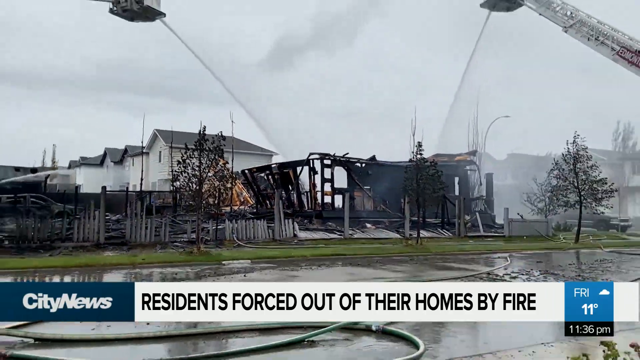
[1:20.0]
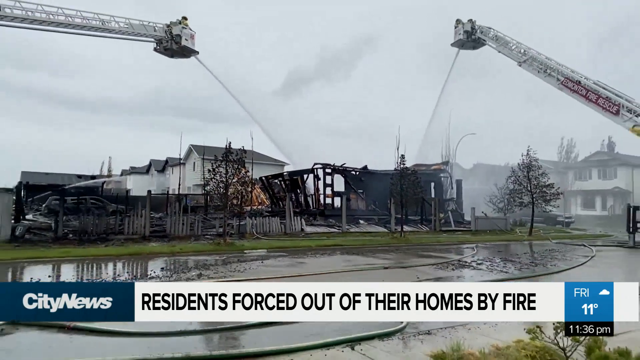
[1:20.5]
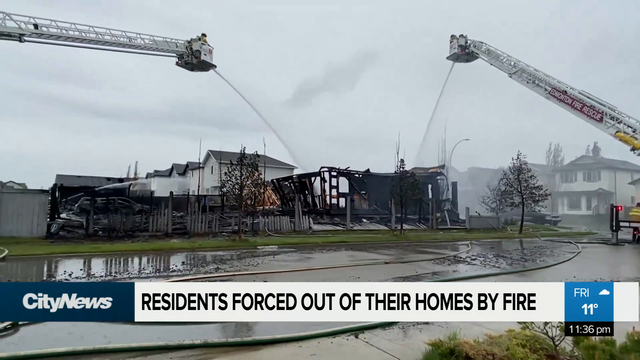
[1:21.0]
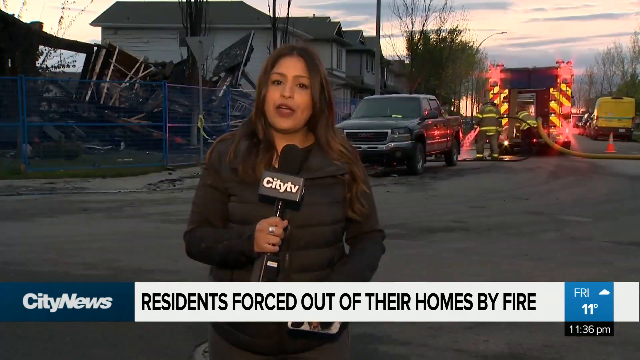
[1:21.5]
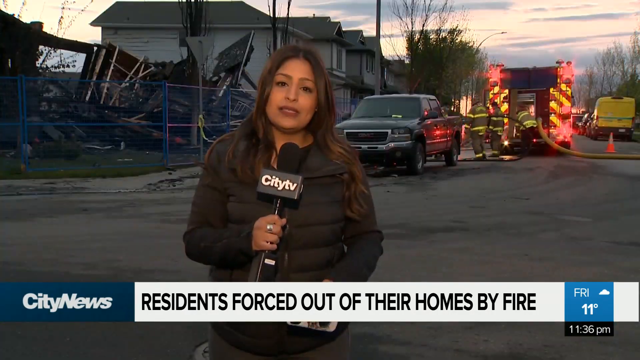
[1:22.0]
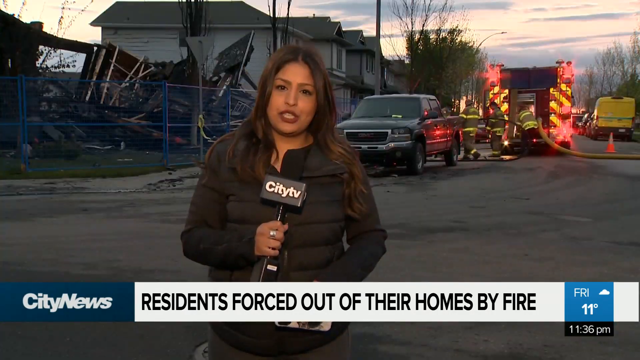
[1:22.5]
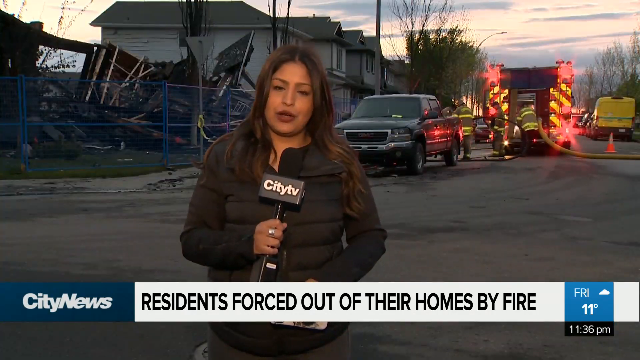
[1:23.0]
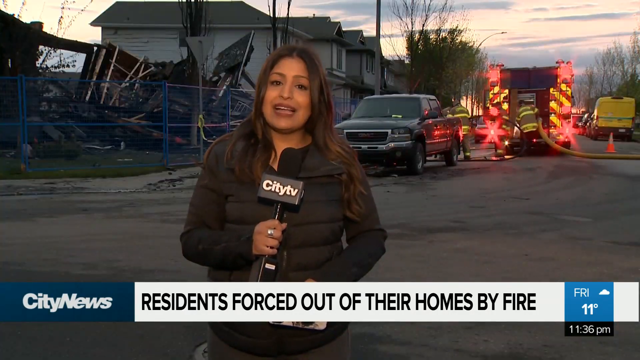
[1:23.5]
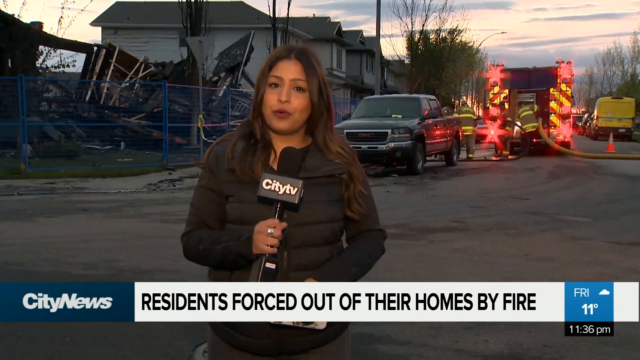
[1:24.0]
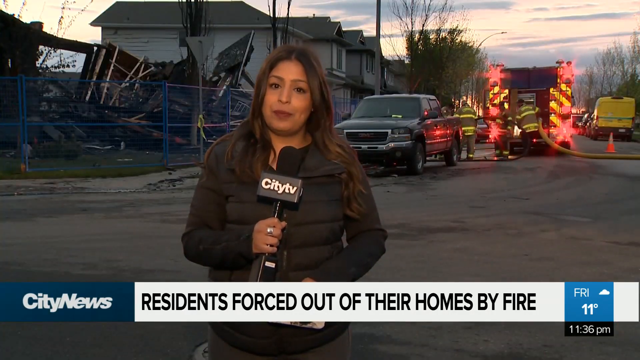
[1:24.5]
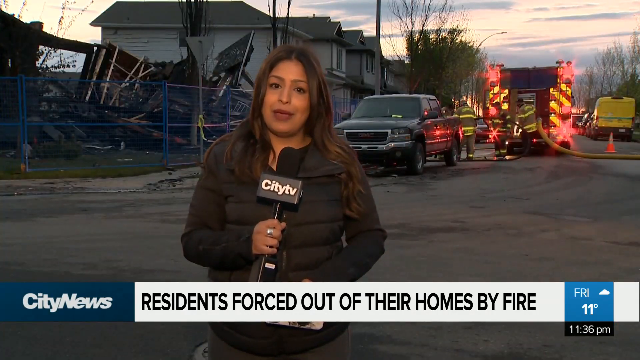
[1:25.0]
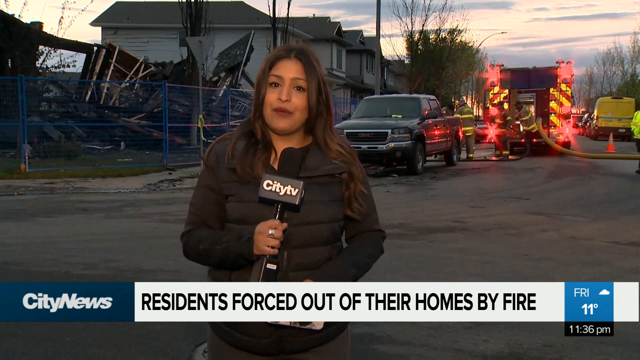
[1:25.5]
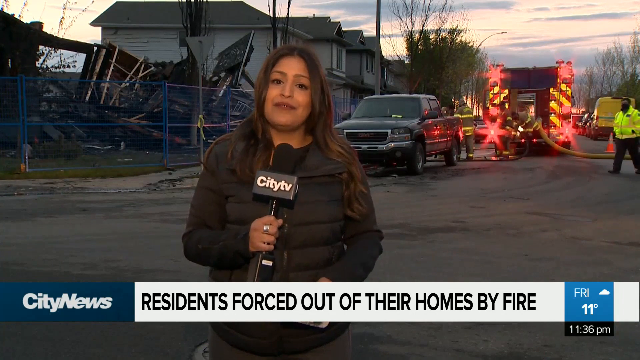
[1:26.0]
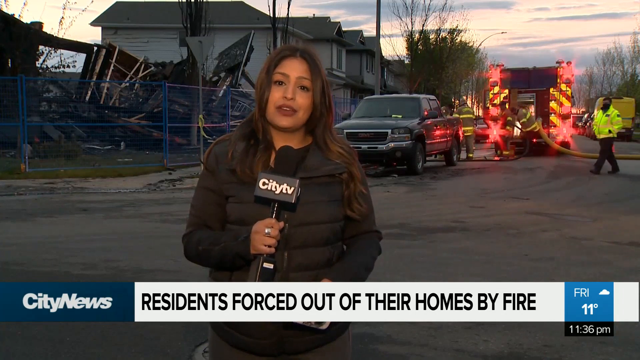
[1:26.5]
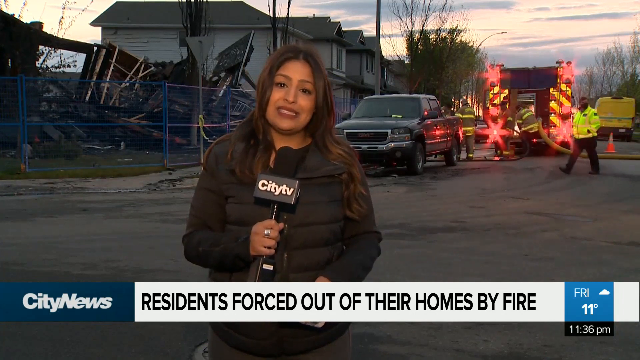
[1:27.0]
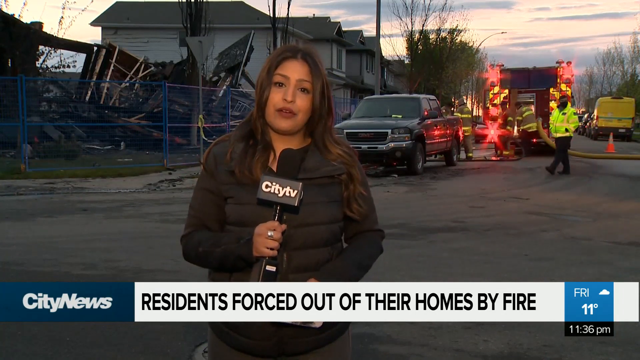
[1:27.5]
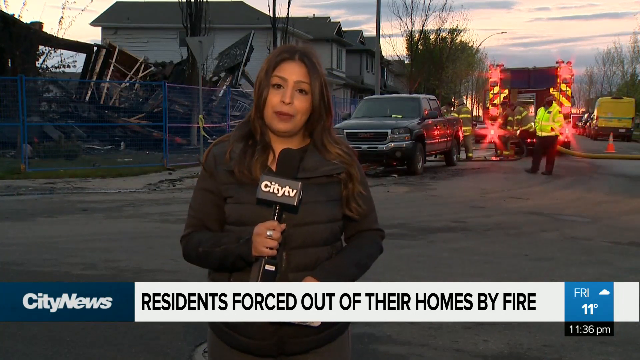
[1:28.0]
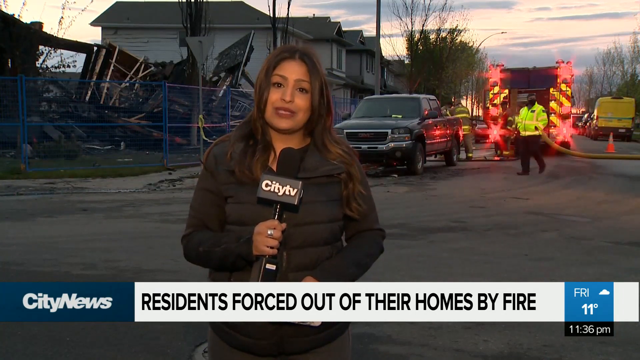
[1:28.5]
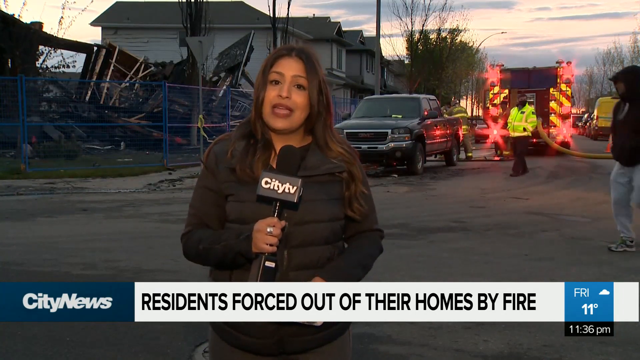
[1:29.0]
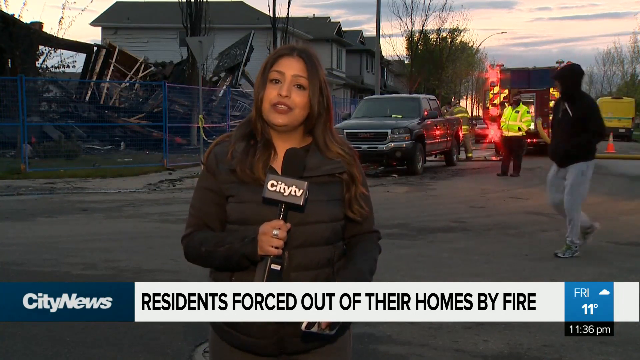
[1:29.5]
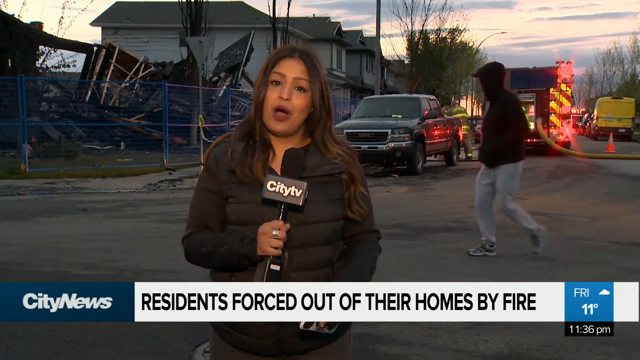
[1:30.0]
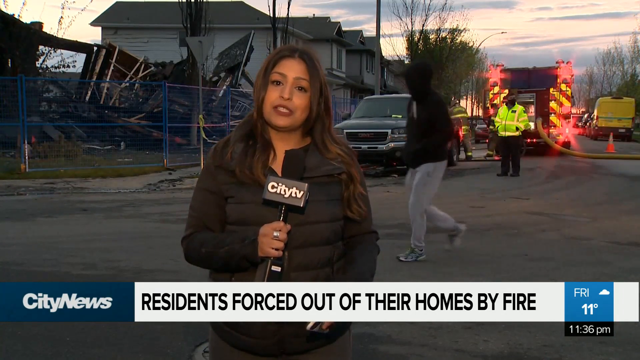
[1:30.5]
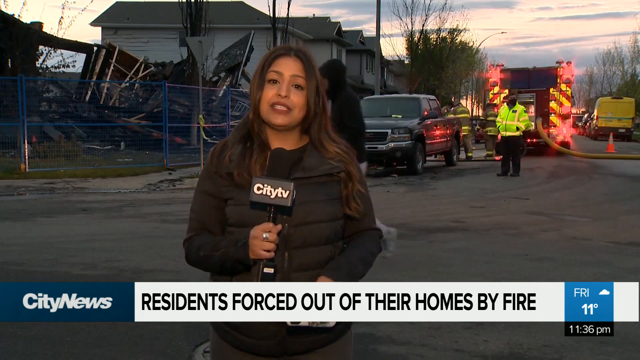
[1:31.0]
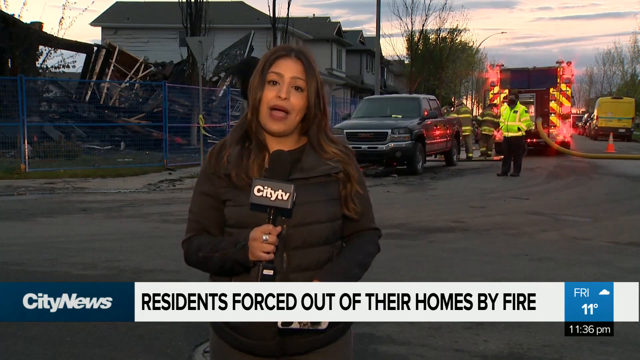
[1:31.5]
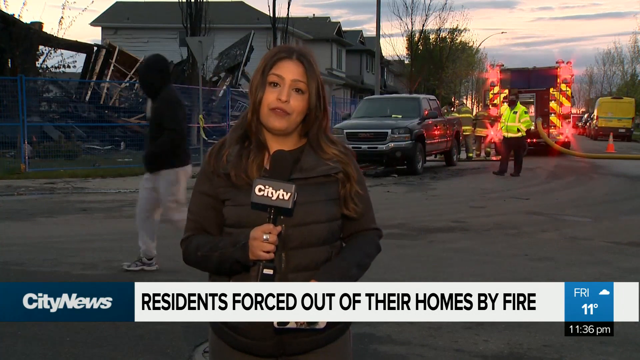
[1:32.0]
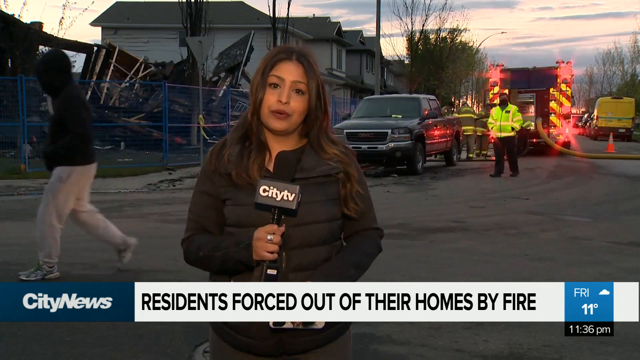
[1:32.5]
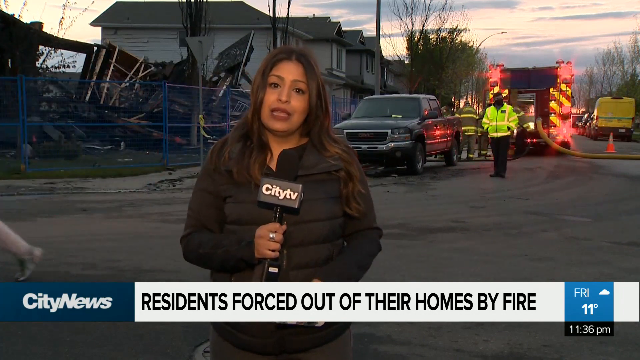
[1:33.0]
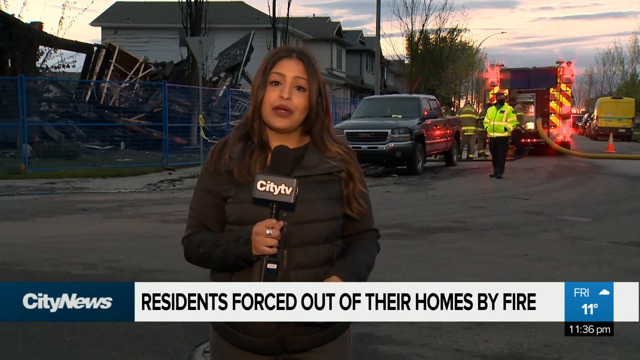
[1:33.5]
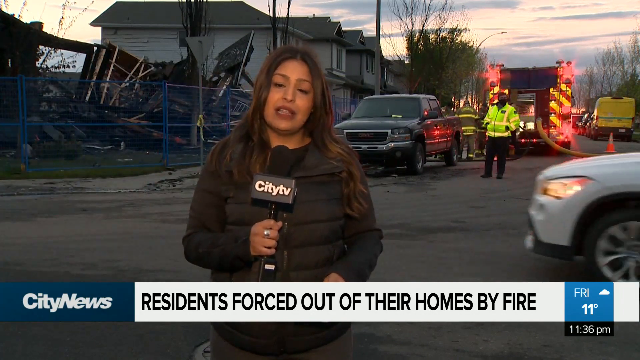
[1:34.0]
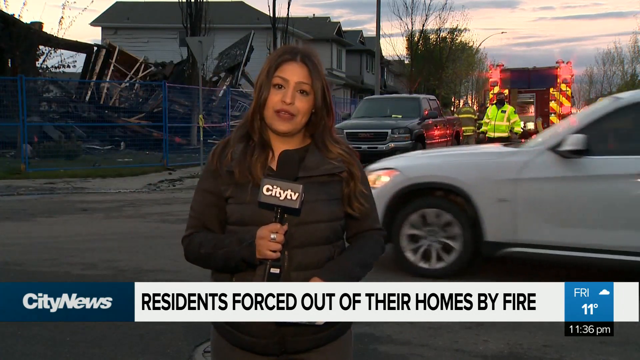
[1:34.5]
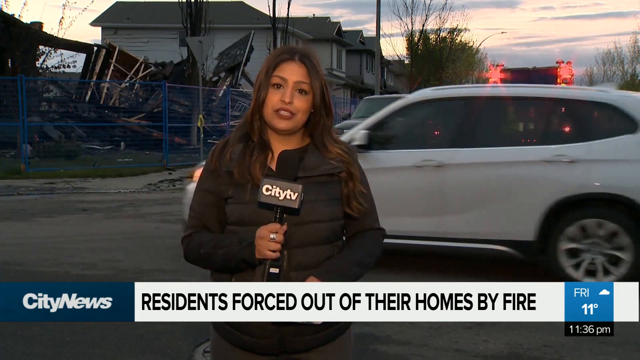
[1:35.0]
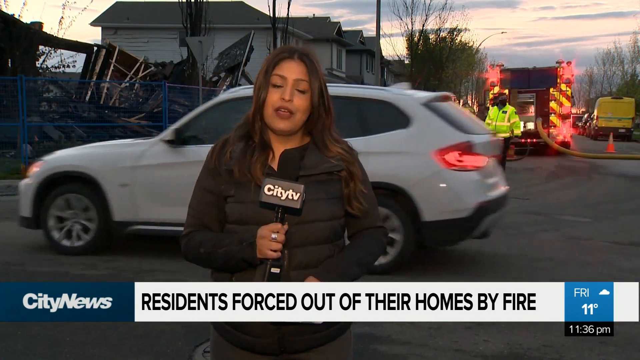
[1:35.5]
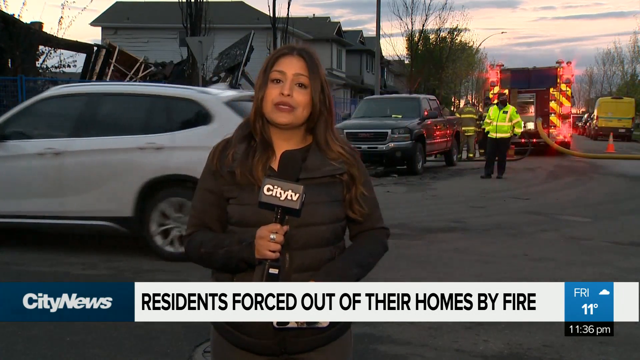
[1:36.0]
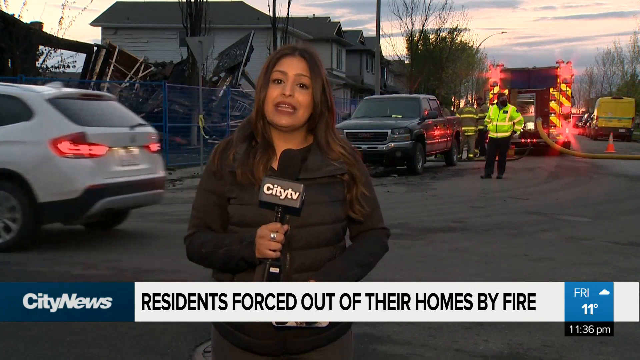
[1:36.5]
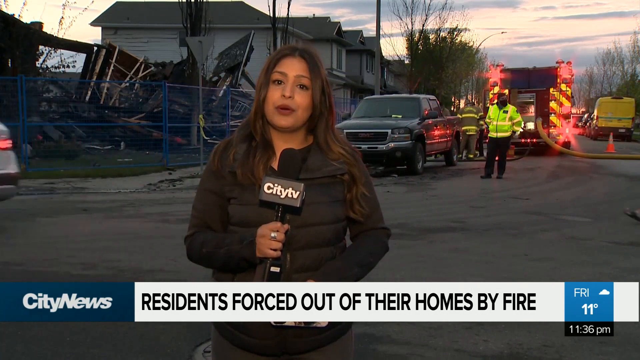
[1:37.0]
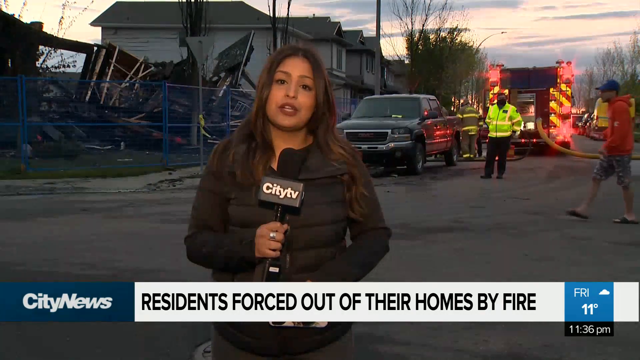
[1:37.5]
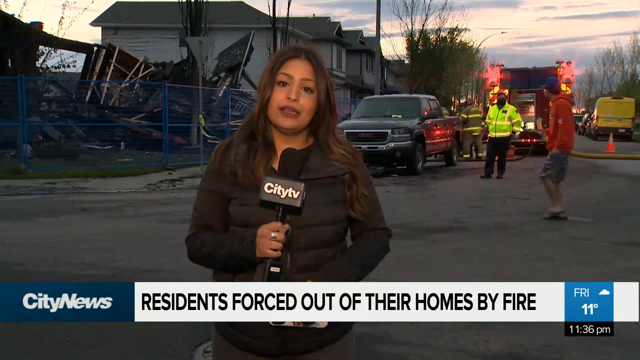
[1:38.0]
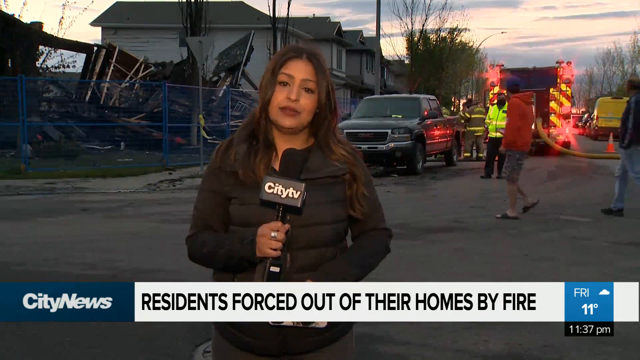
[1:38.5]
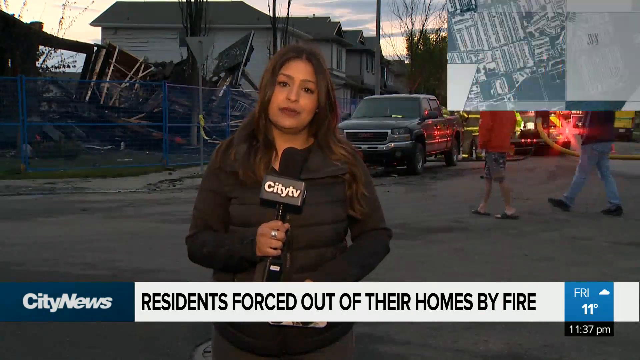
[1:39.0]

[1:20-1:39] Two large white extension ladders coming off the fire truck have been put up into the air, and water is being shot down from them onto the outer shell of what is left of the house that is still standing. The brunette reporter then speaks into the camera, holding a black microphone with the logo "City TV" on the front. She wears a black jacket. Behind her is a black pickup truck and blue fencing around the debris of the fallen, burned-down house, and behind that is the back end of a fire truck. Lots of red lights are lit up. Either a police officer or a fireman wears black pants and a very bright yellow safety jacket. Yellow and orange cones are out, and a yellow fire hose is still laid across the ground. It is dusk. Different people in the neighborhood walk by, including a man in a black hoodie and gray sweatpants, and a white car drives by.